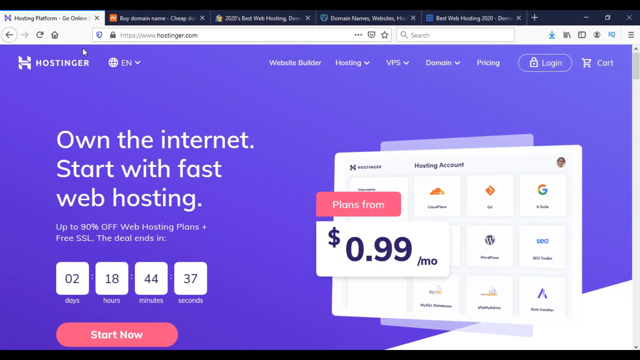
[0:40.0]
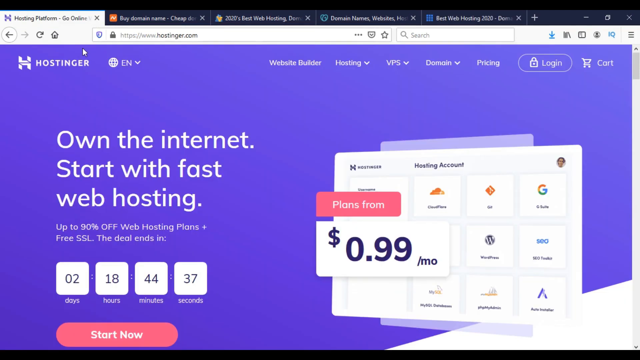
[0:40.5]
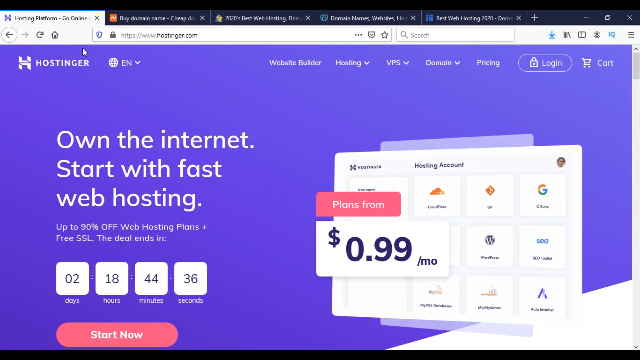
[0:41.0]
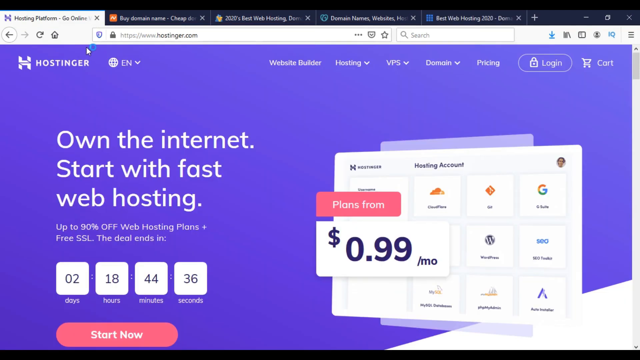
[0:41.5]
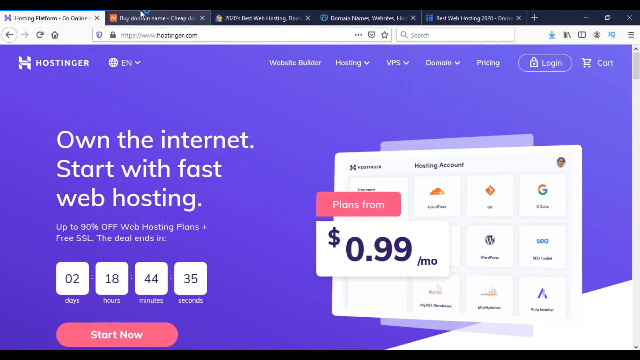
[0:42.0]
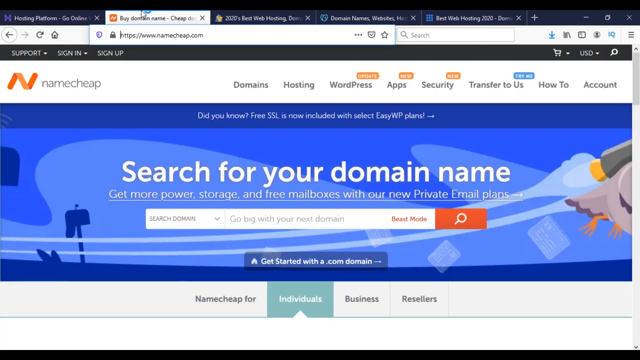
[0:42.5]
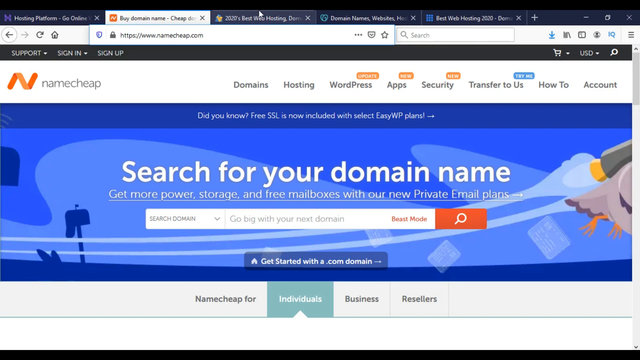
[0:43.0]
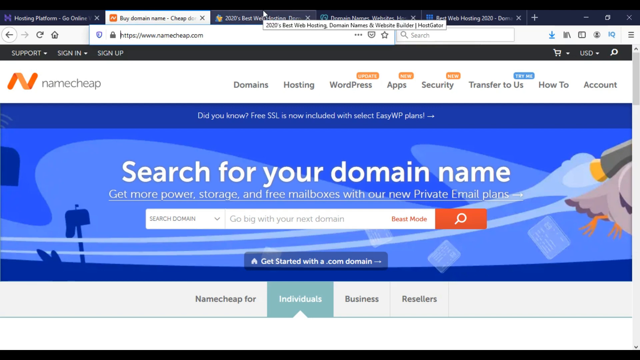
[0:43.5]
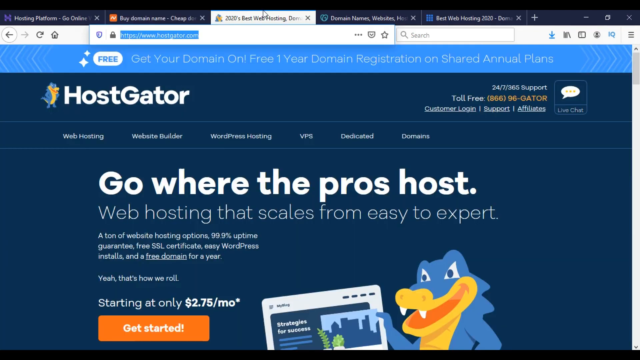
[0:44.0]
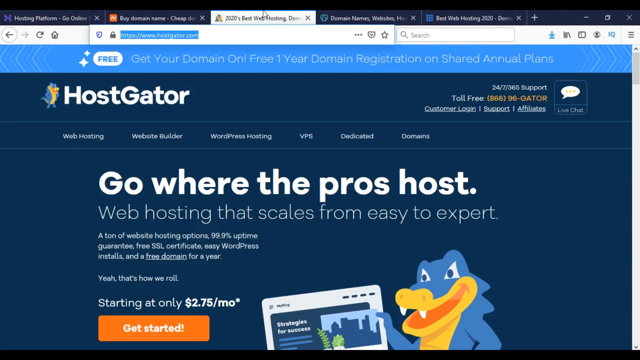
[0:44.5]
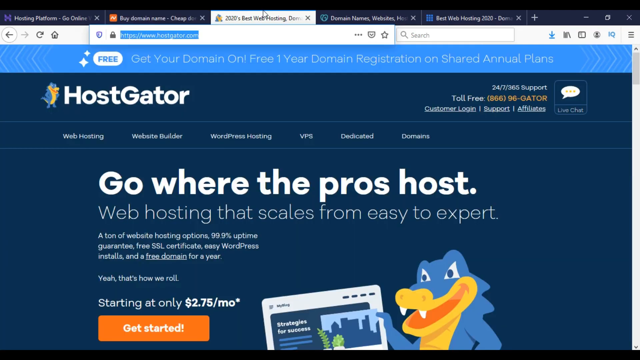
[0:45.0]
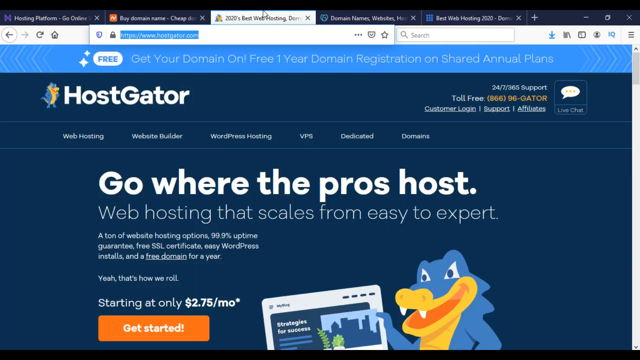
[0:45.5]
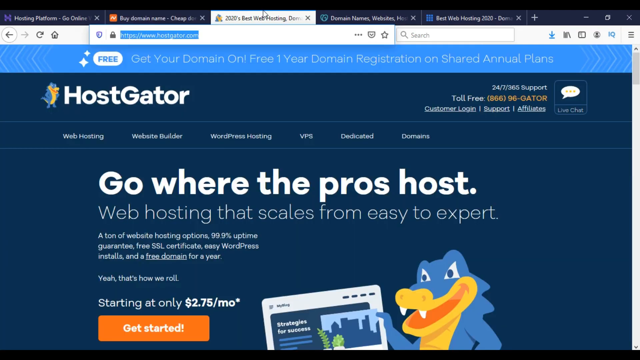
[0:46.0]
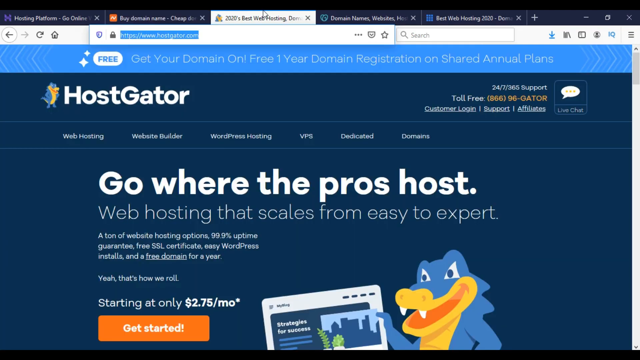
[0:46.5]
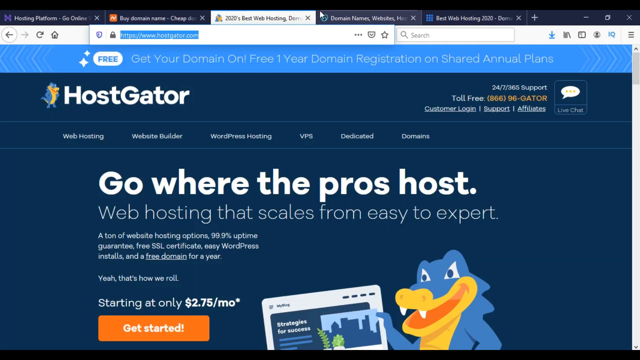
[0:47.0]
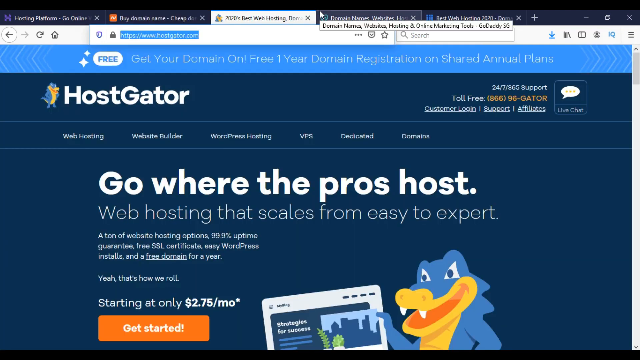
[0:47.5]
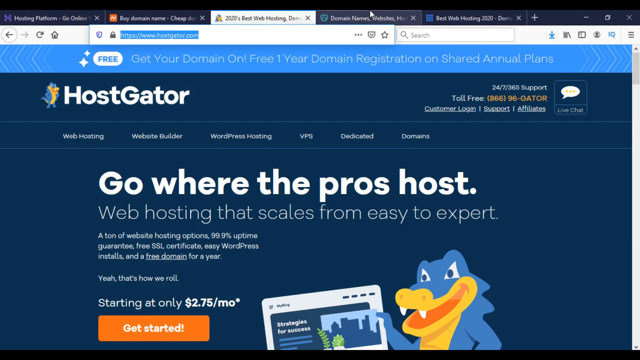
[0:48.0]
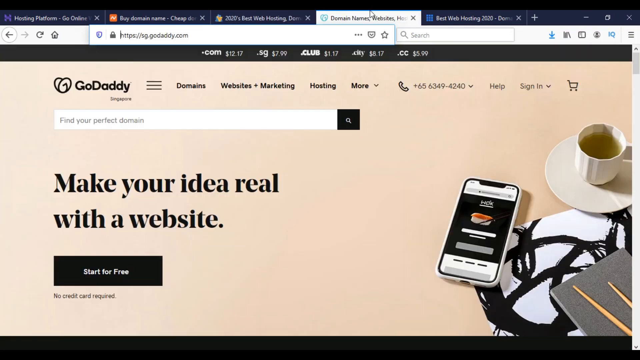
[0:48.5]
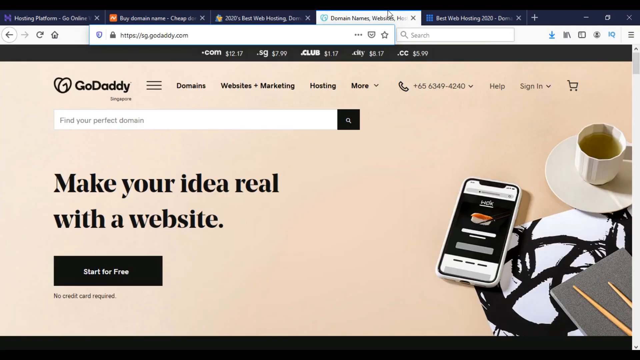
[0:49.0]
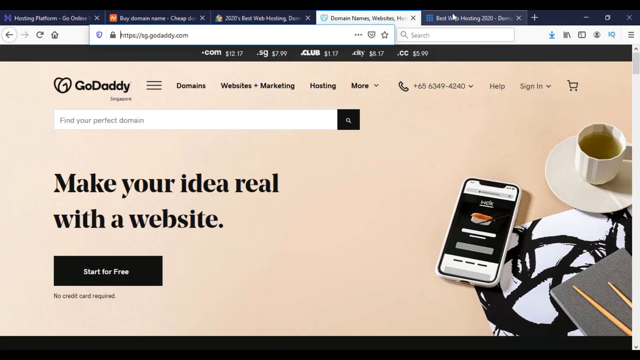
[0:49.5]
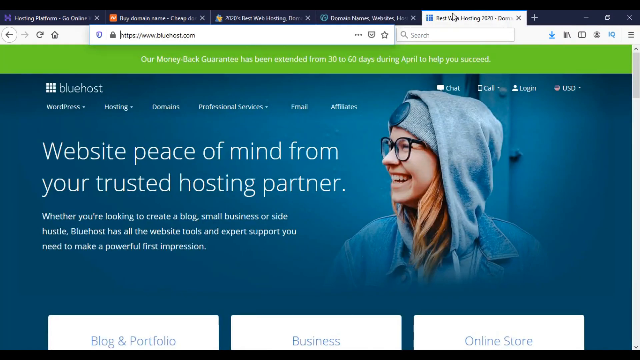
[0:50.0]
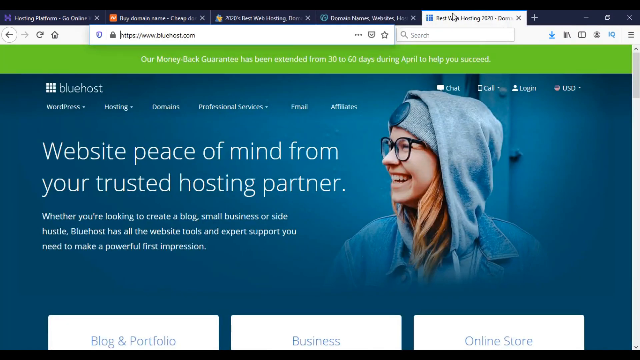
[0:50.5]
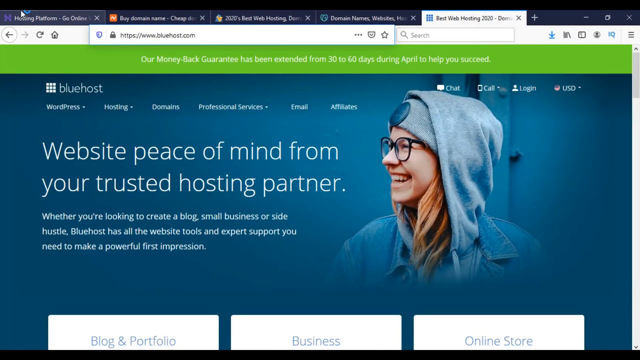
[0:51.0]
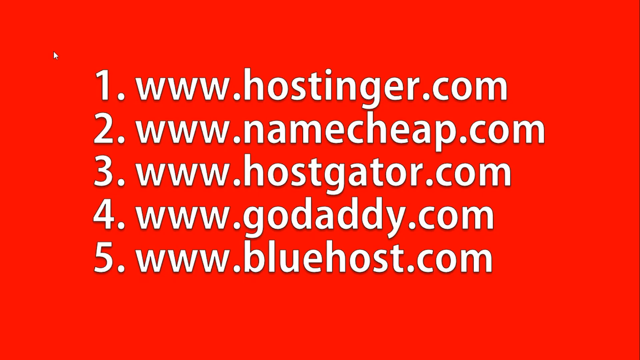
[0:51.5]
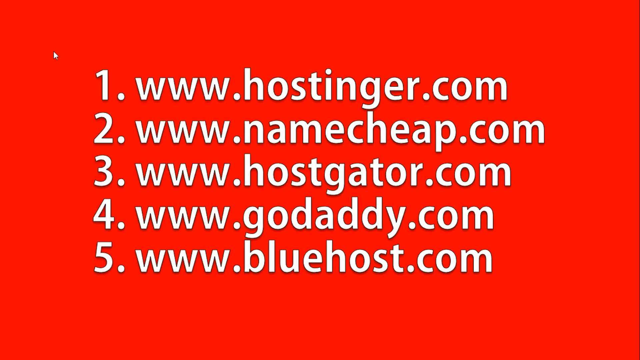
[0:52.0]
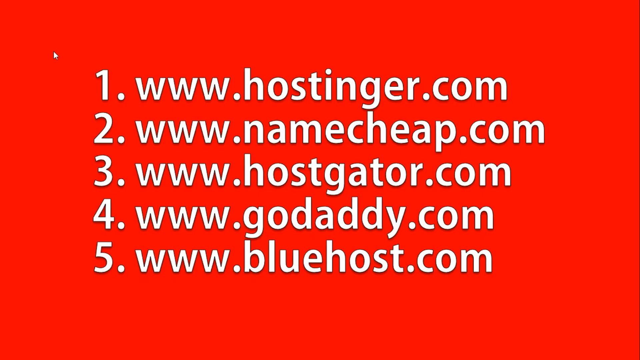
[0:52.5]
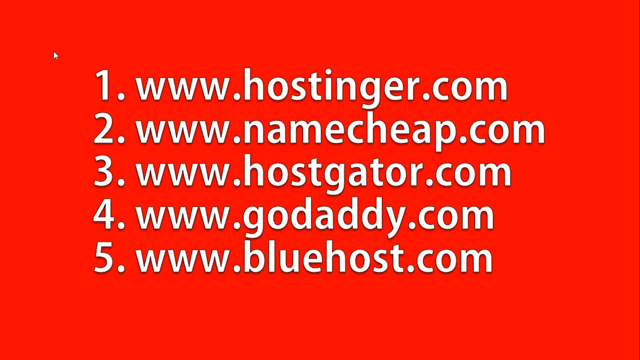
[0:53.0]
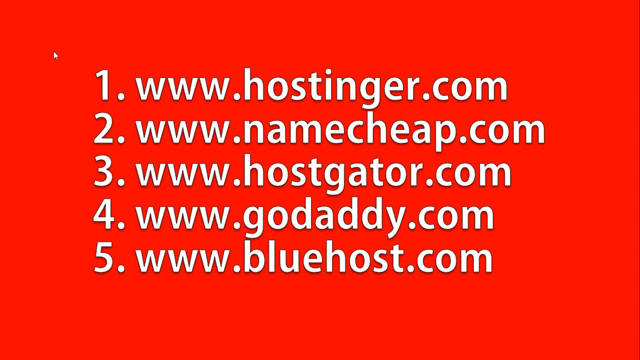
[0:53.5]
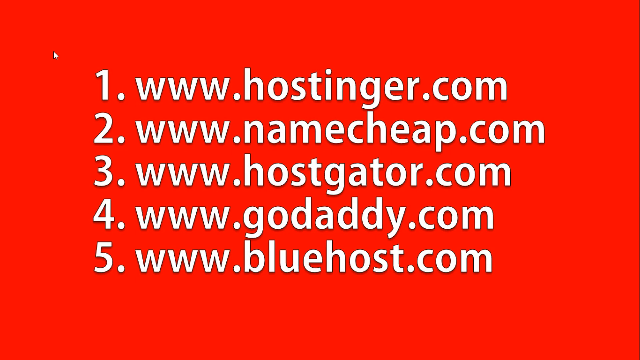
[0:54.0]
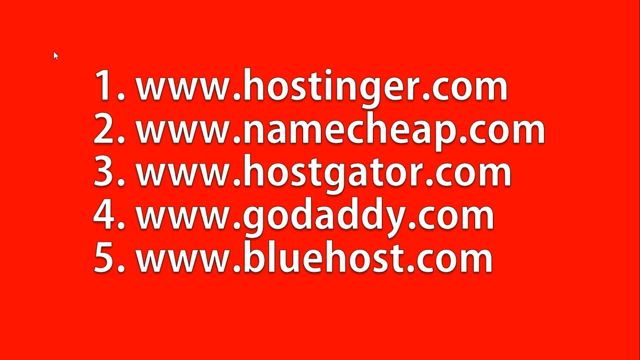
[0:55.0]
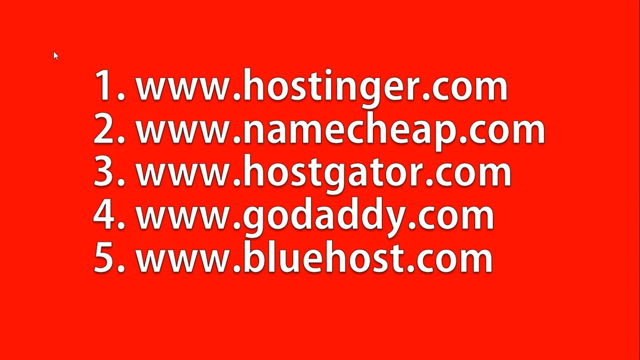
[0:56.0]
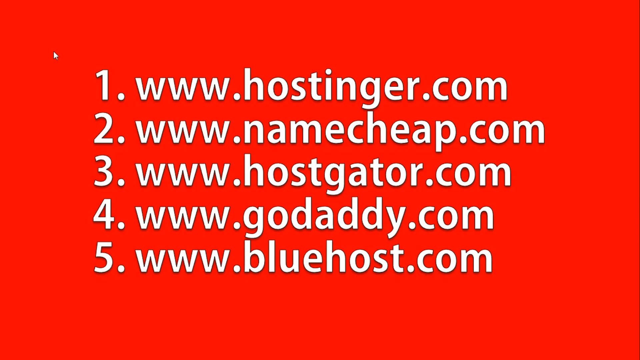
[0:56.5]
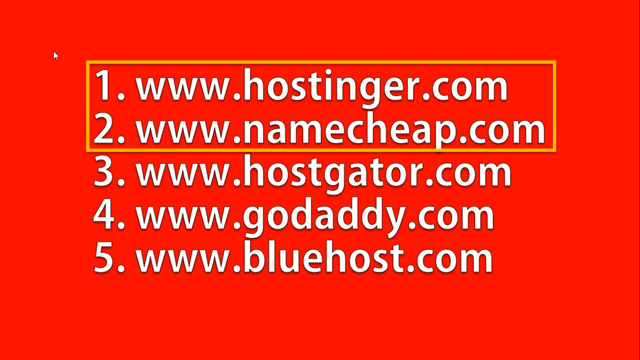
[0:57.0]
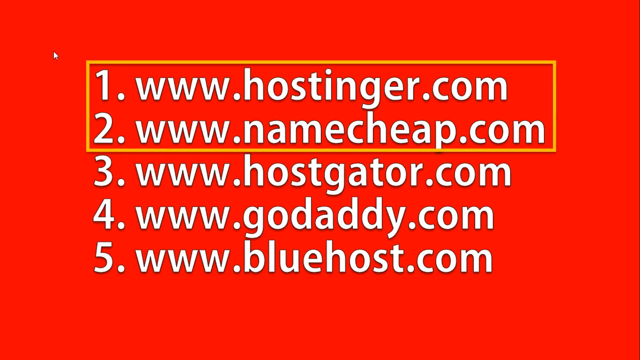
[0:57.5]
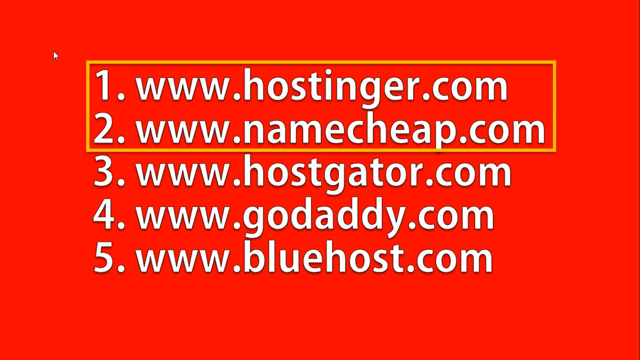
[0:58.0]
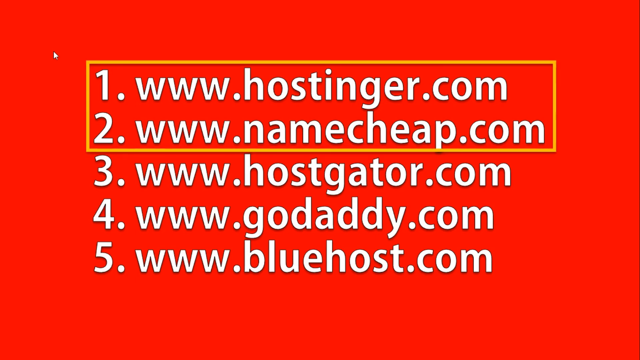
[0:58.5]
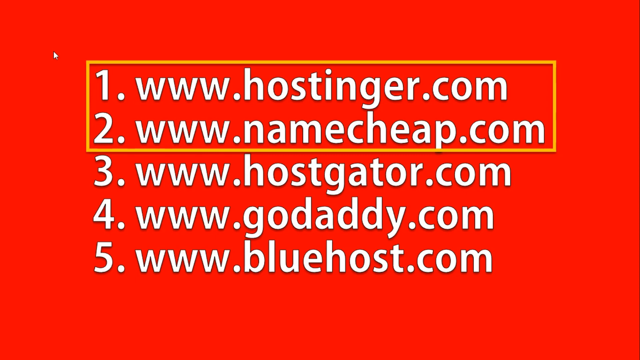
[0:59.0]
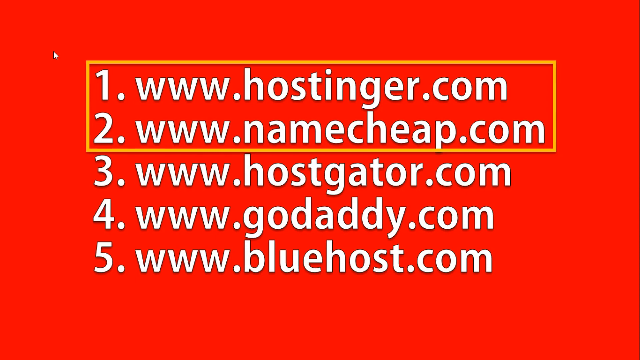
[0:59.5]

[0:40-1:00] The same purple Hostinger page appears, reading "on the internet, start with fast web hosting," with a picture on the side that says "plans start from 99 cents a month." Beneath the main text are four square blocks reading 02, 18, 44 and 37. Browser tabs are then flipped through: first the Hostinger tab, then Namecheap as the second, followed by the HostGator, GoDaddy and Bluehost tabs, each showing a different website hosting site. After the websites, a solid web page appears with a list numbered one through five, each entry showing a website in bold: number one is "www.hostinger.com" and number two is "www.namecheap.com."